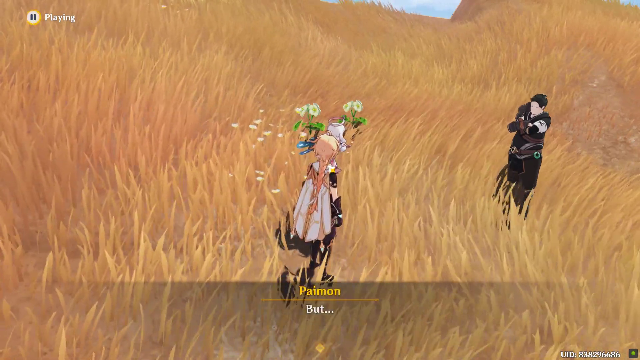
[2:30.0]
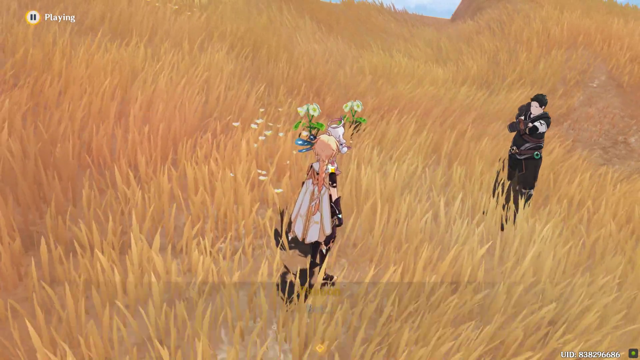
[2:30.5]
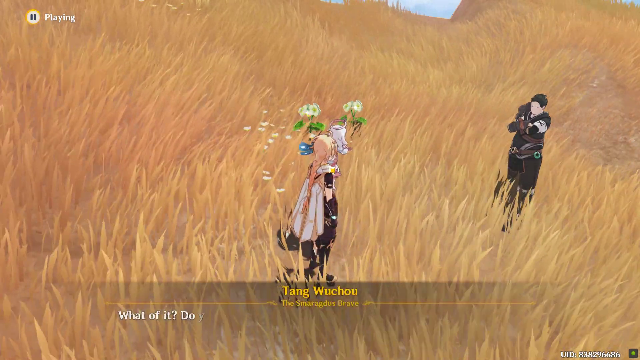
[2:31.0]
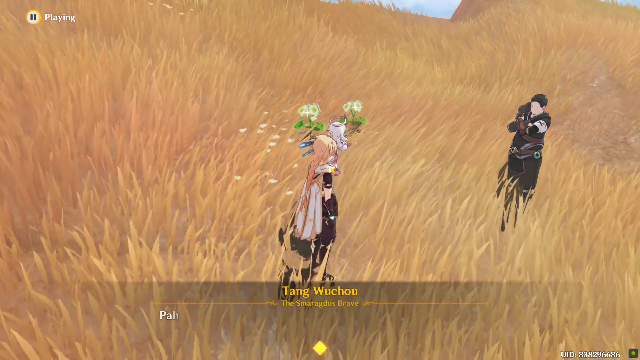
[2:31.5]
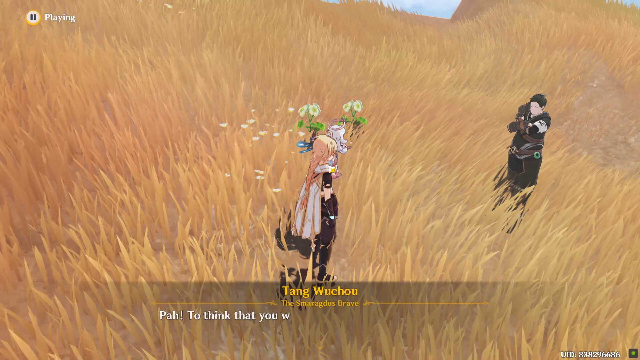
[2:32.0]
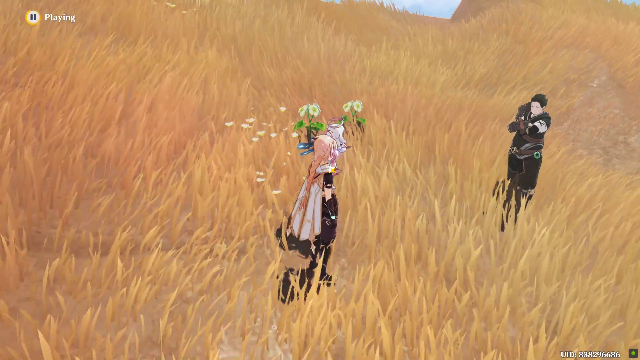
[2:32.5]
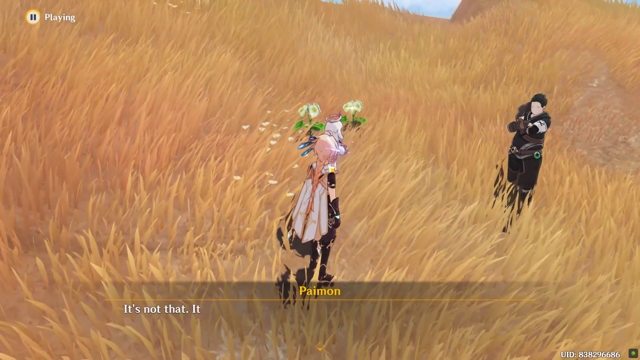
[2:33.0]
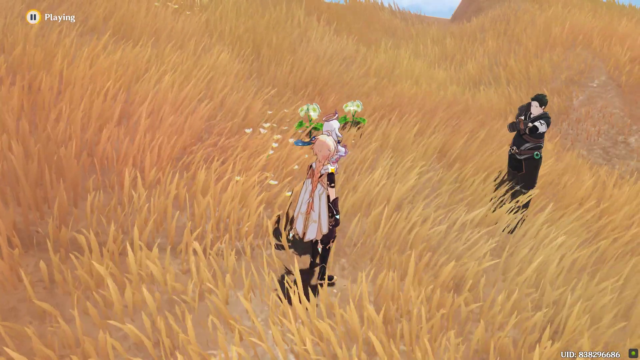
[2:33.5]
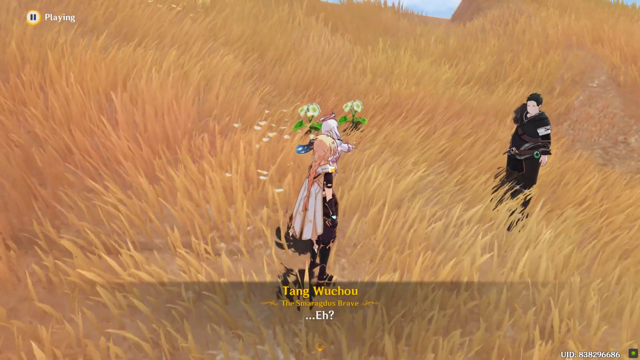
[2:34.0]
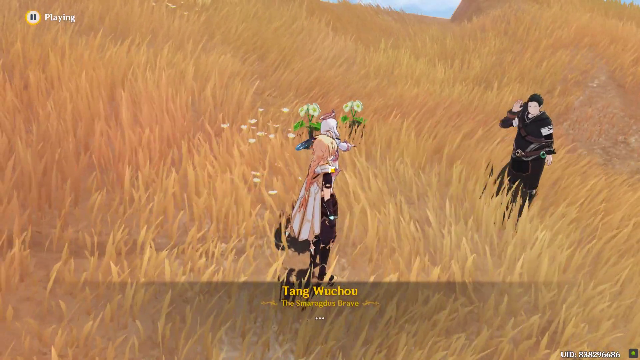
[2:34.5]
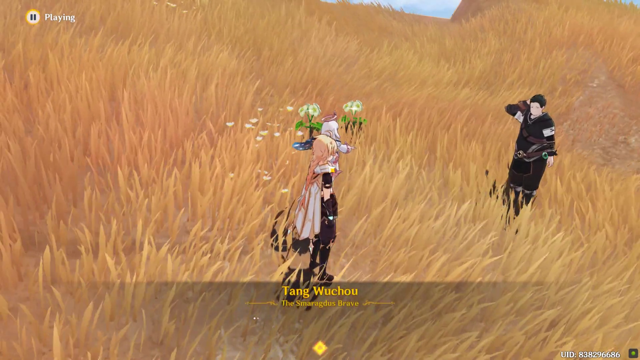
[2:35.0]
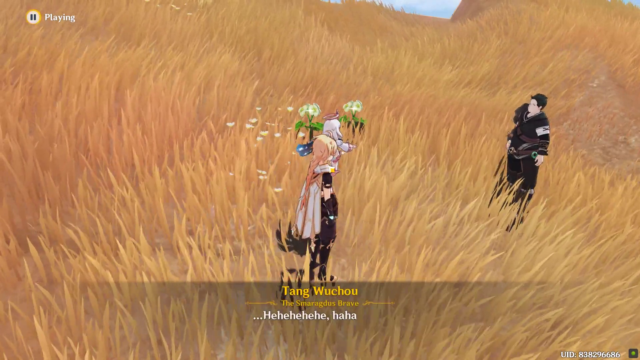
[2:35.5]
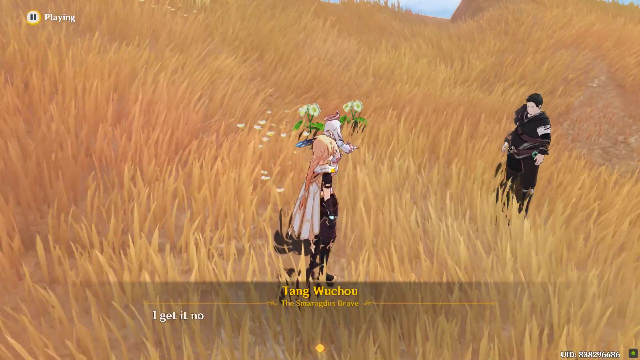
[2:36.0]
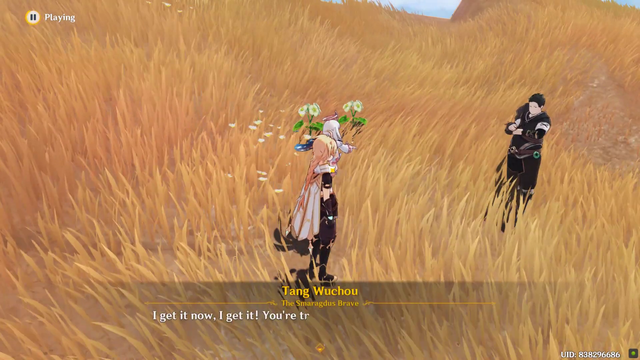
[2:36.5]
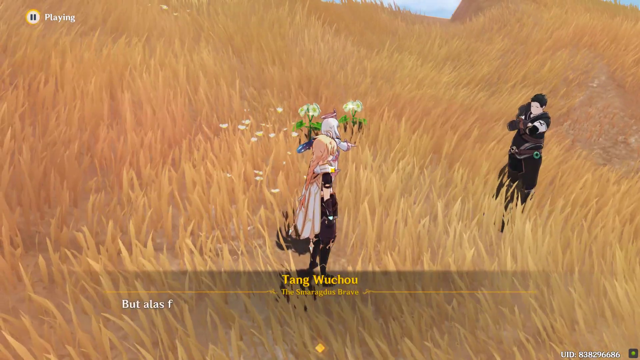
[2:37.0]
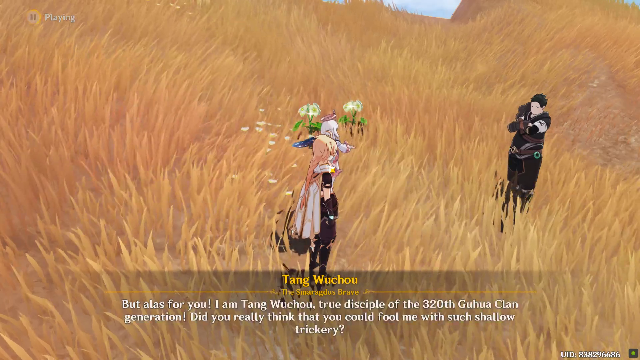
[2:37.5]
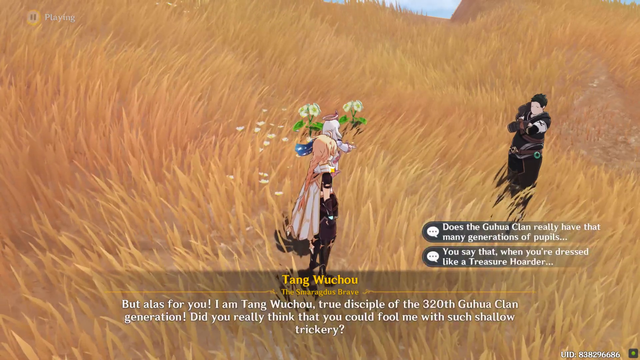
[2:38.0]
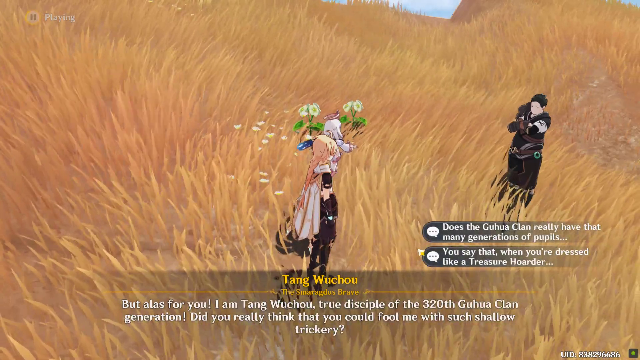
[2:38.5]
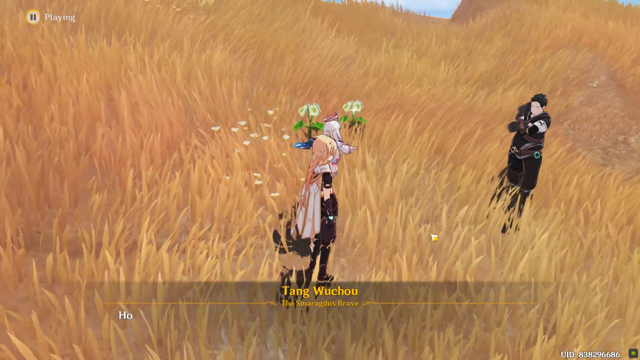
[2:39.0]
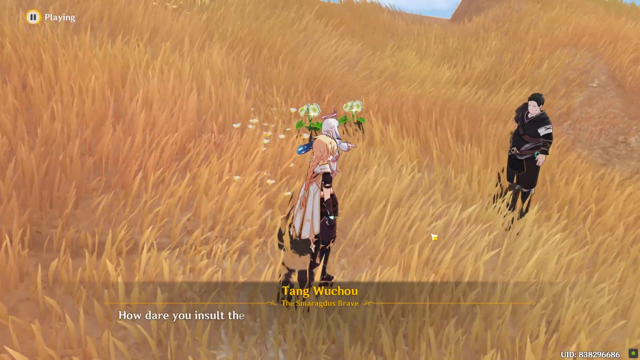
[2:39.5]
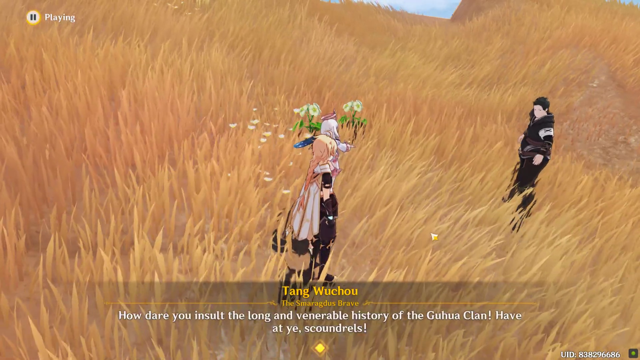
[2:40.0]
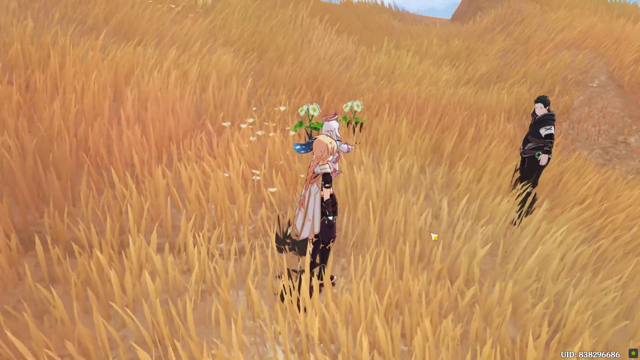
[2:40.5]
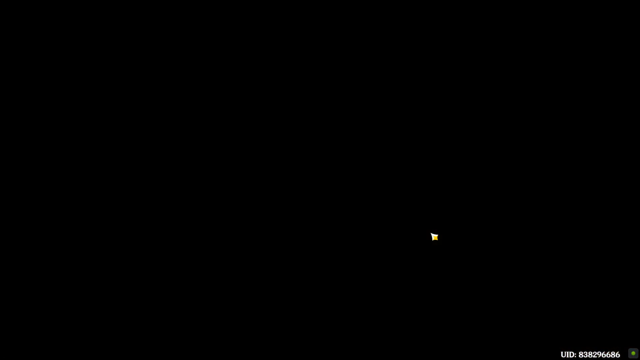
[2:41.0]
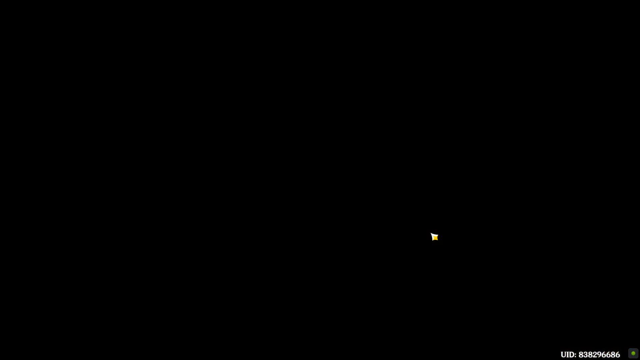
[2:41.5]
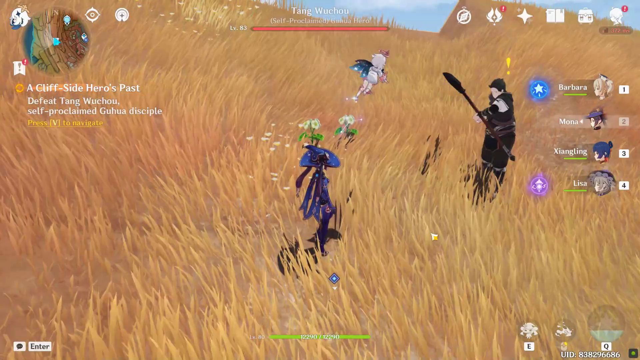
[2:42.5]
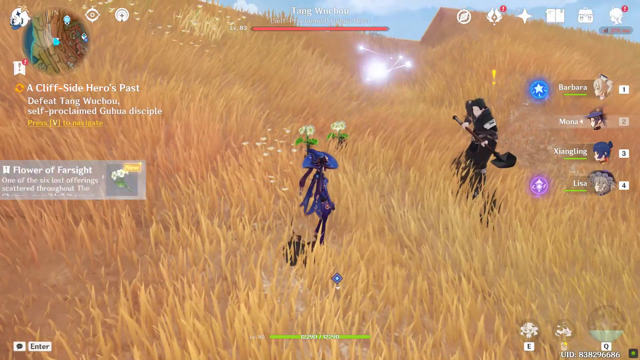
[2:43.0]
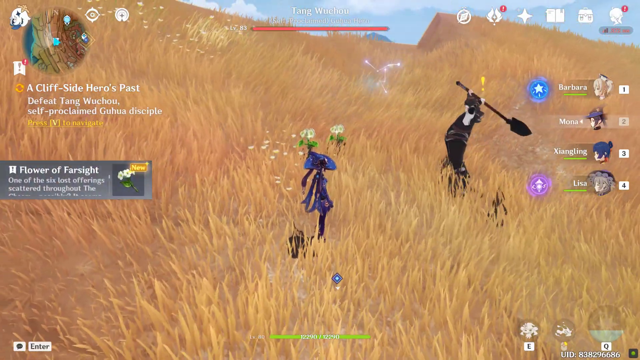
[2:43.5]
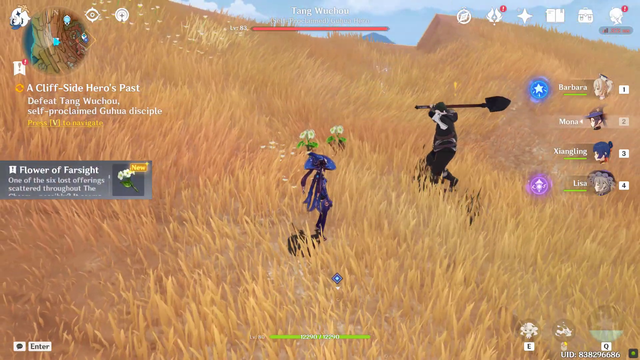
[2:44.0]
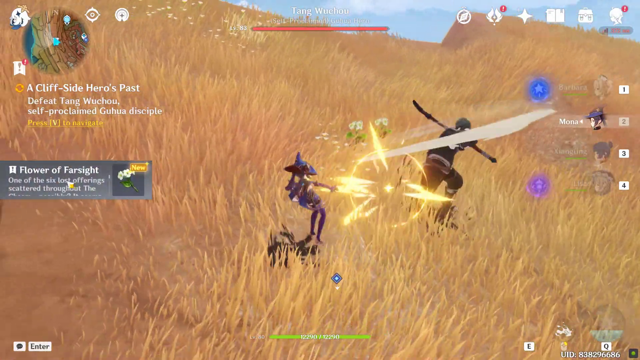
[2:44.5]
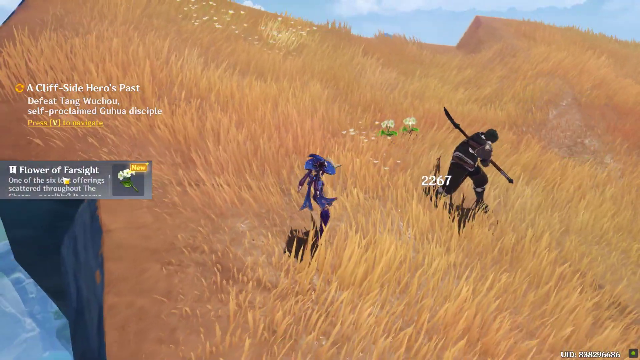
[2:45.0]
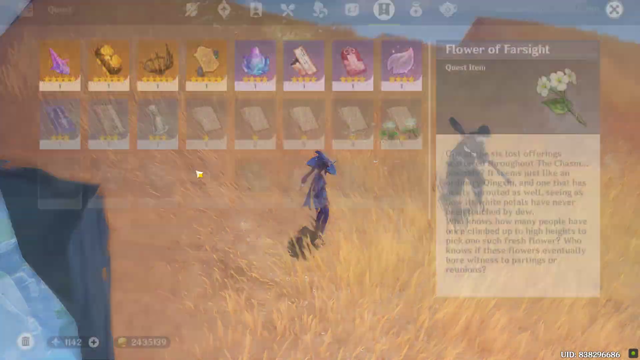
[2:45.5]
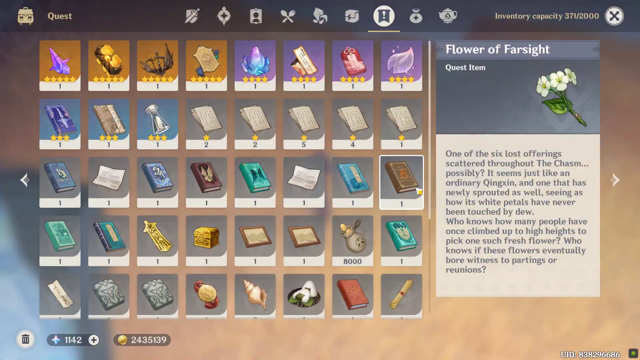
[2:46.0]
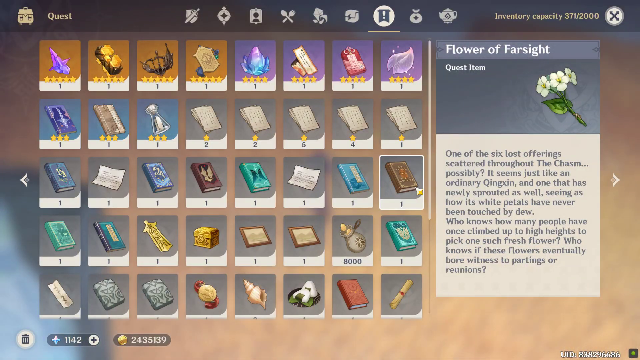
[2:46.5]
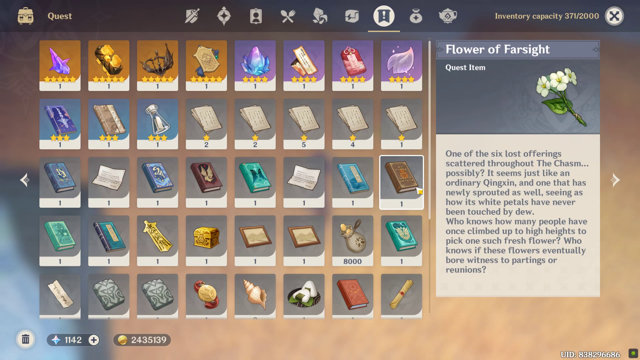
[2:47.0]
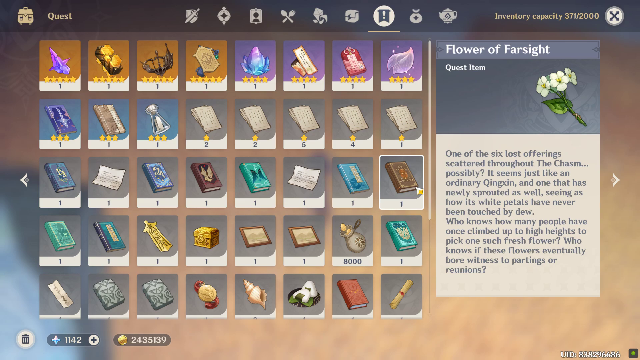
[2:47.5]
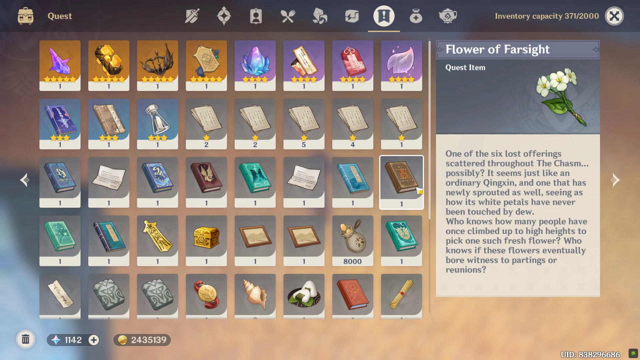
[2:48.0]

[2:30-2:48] The conversation continues, and text reads "payment". The character to the left of the main character looks almost like an angel: she appears to have a pink halo above her head and blue wings, and she looks smaller, as if hovering above the ground. Tang Wu Chao does all the talking at this point, and the text reads "But alas for you I am Tang Wu Chao true disciple of the 320th Wu Chao clan generation did you really think that you could fool me with such a shallow trickery". Two pop-ups like speech bubbles appear on screen, reading "Does the Wu Chao clan really have that many generations of pupils" and "You say that when you're dressed like a treasure hoarder". Then the text reads "How dare you insult the long and venerable of the Wu Chao clan have at ye scoundrel", and there is a red puff.